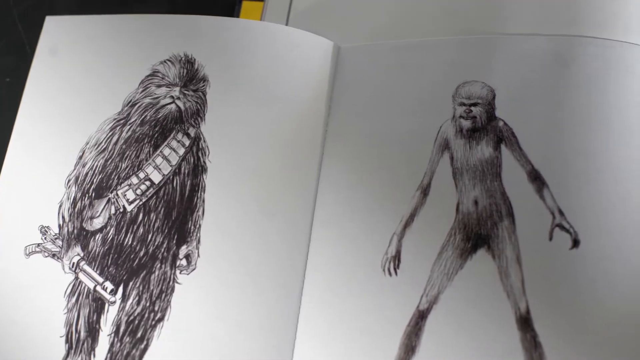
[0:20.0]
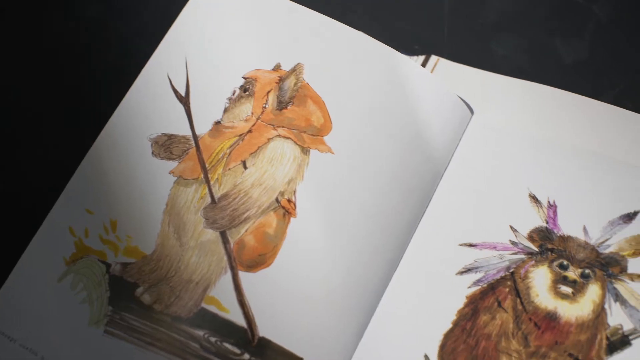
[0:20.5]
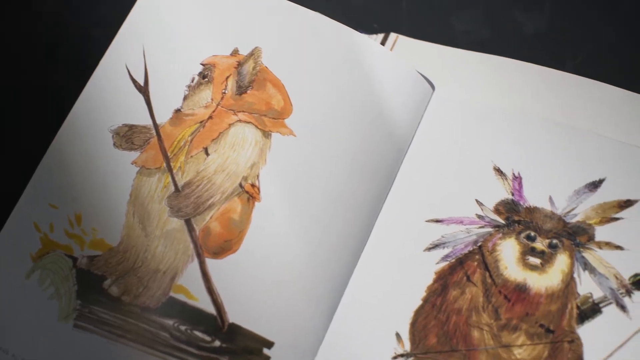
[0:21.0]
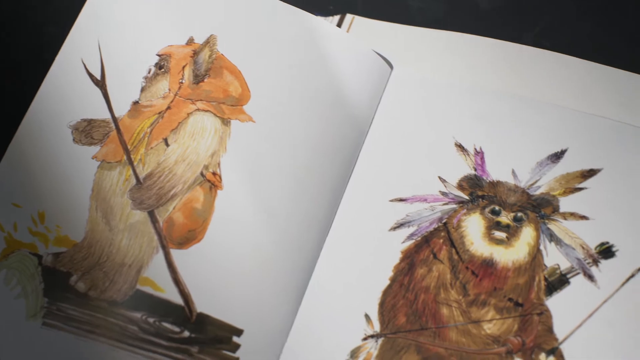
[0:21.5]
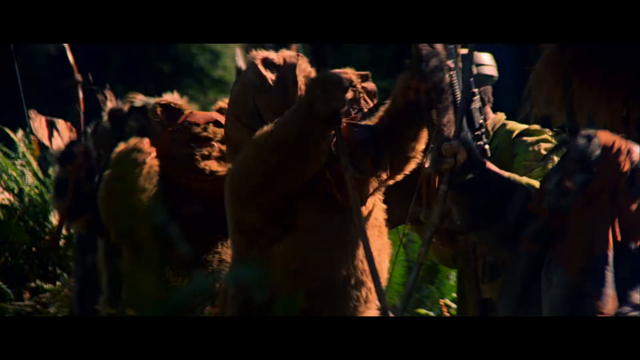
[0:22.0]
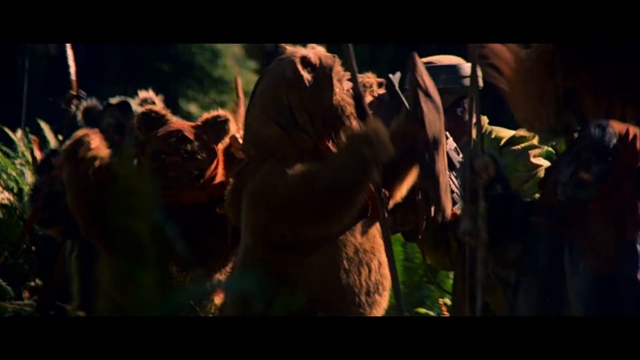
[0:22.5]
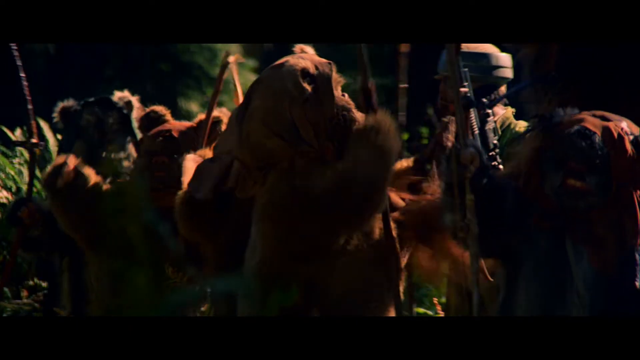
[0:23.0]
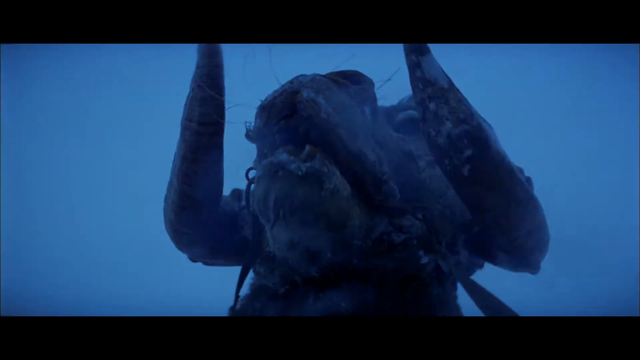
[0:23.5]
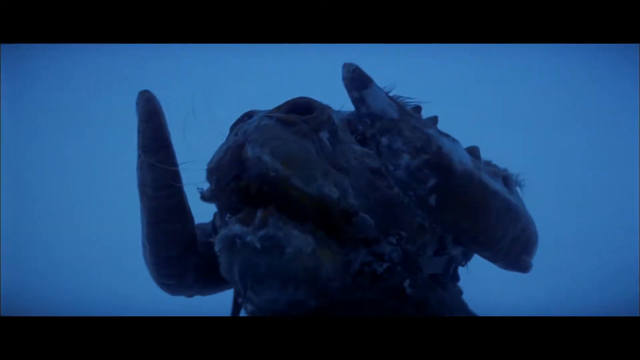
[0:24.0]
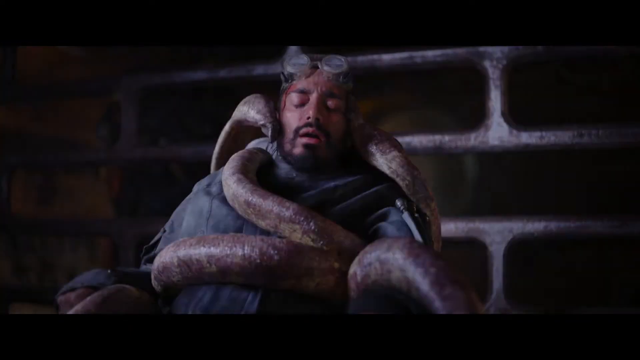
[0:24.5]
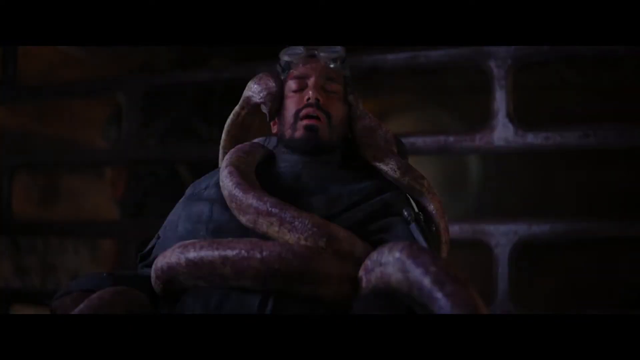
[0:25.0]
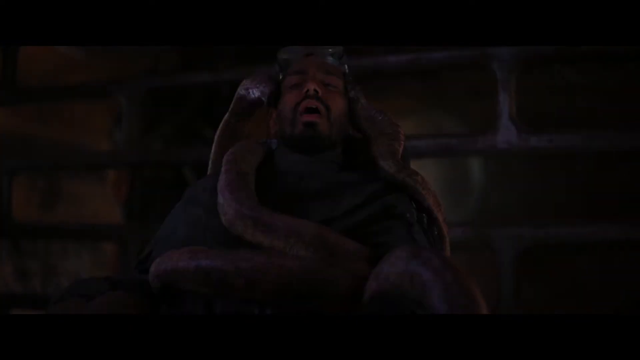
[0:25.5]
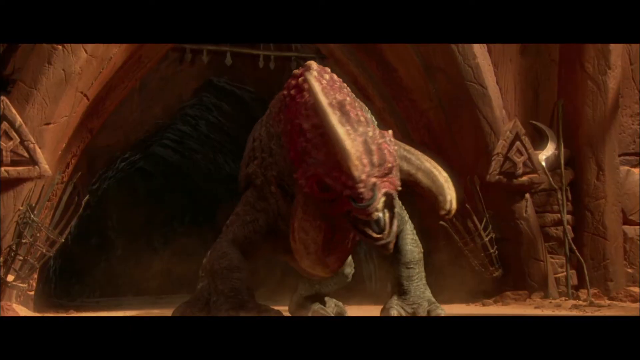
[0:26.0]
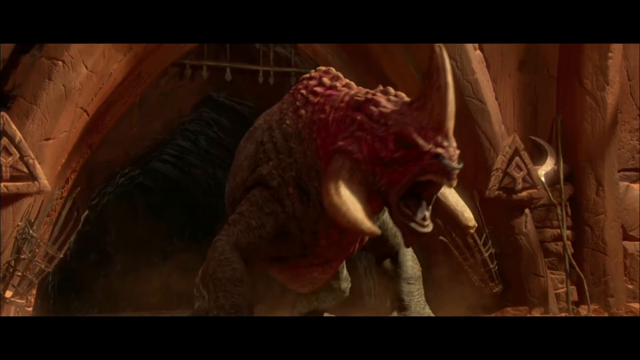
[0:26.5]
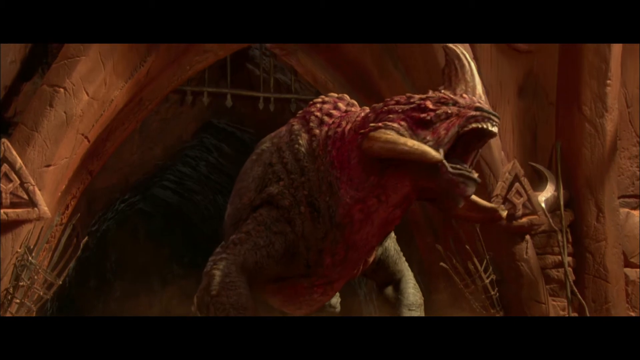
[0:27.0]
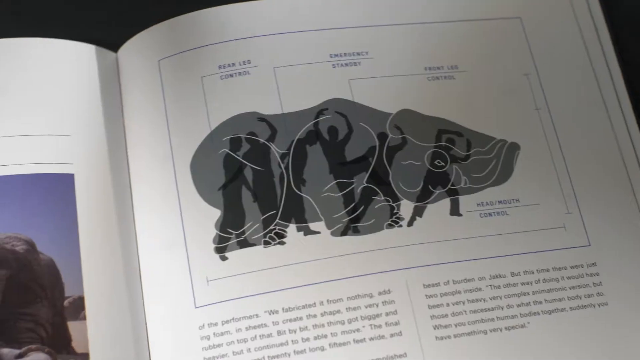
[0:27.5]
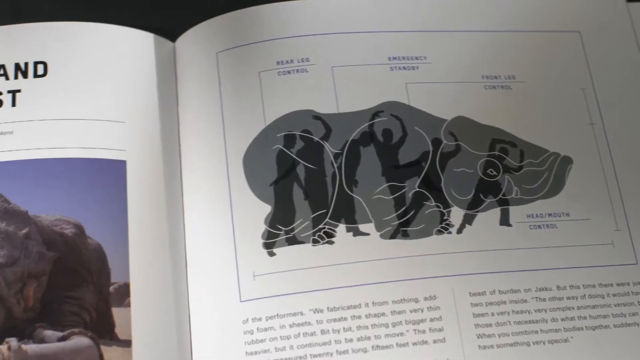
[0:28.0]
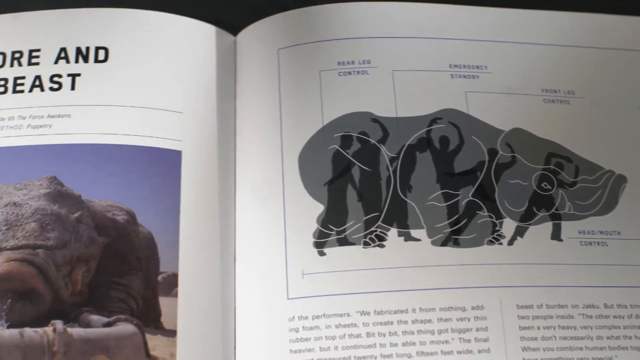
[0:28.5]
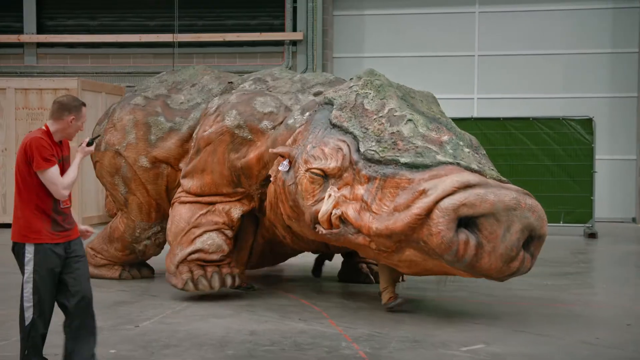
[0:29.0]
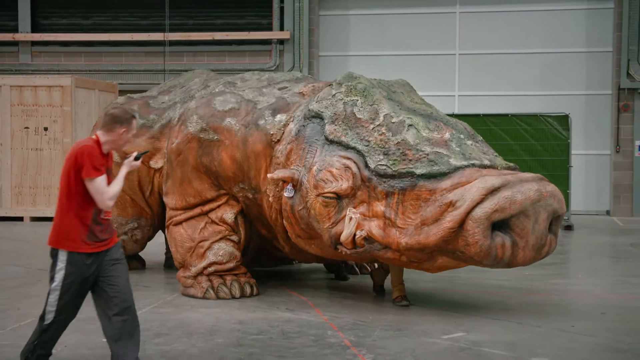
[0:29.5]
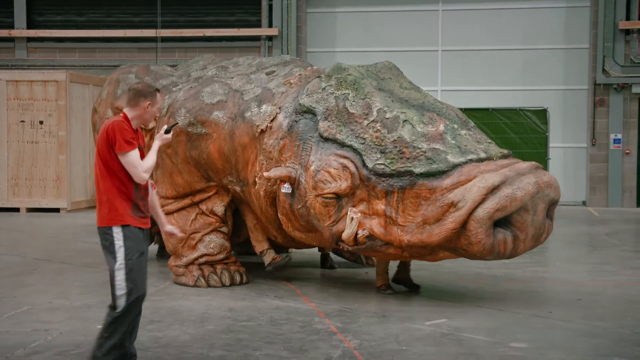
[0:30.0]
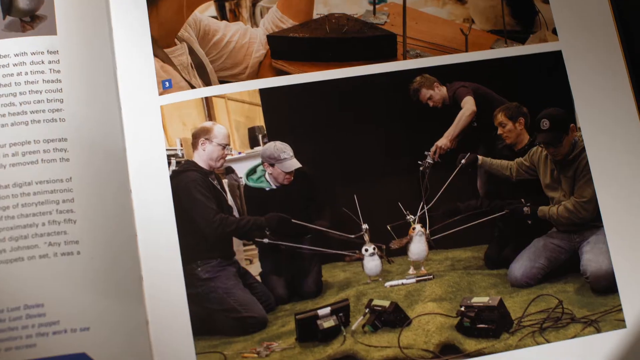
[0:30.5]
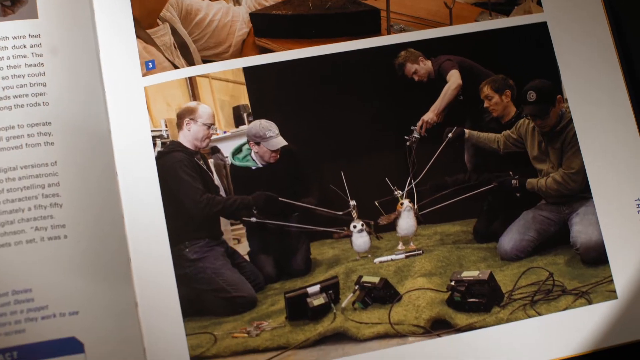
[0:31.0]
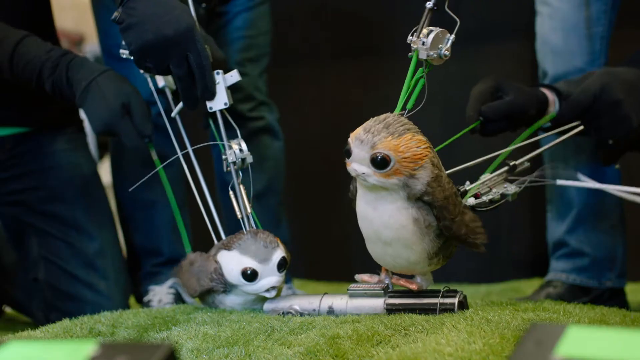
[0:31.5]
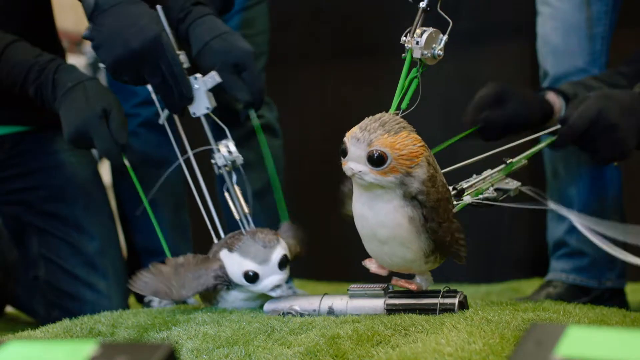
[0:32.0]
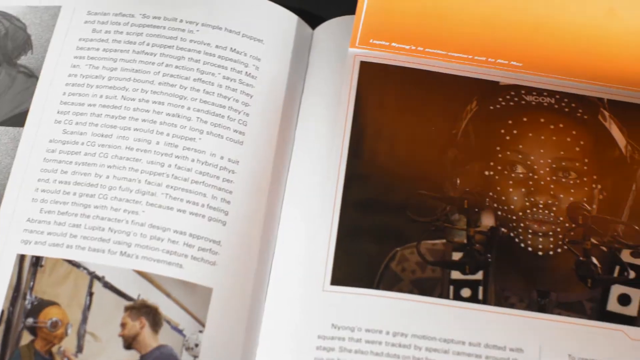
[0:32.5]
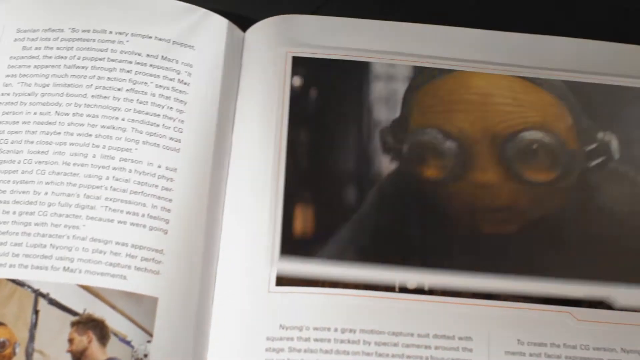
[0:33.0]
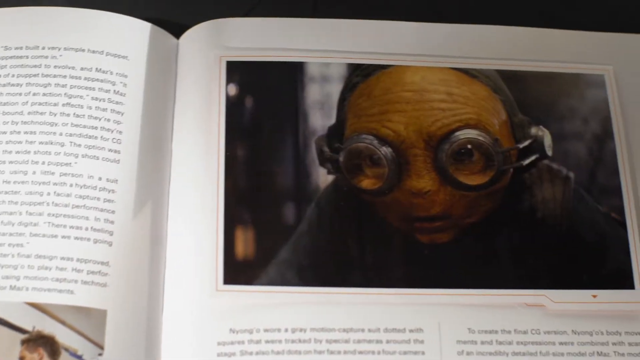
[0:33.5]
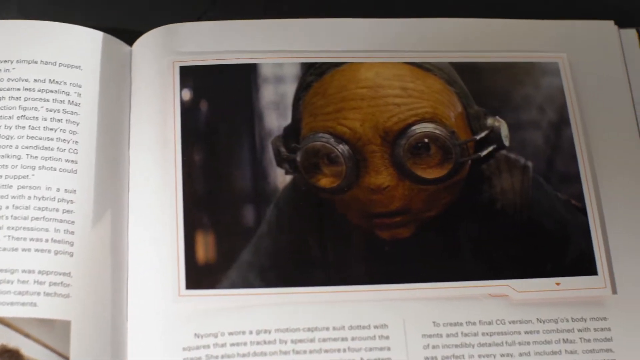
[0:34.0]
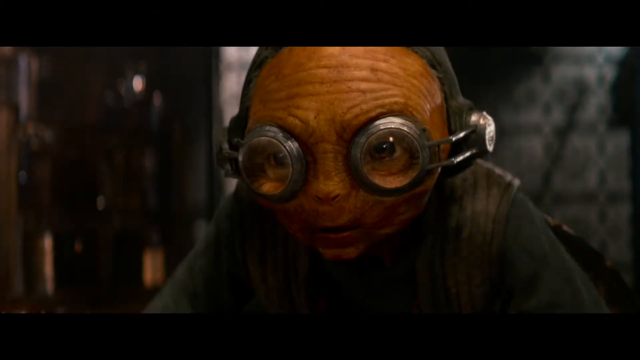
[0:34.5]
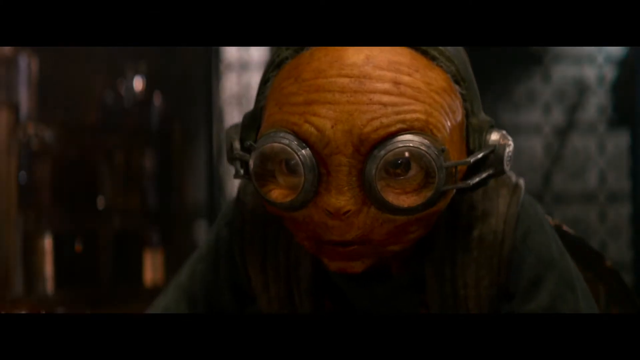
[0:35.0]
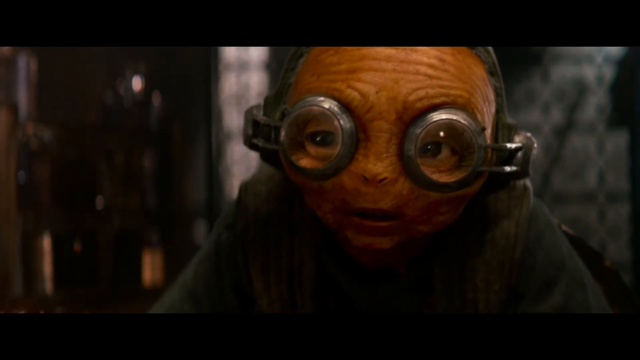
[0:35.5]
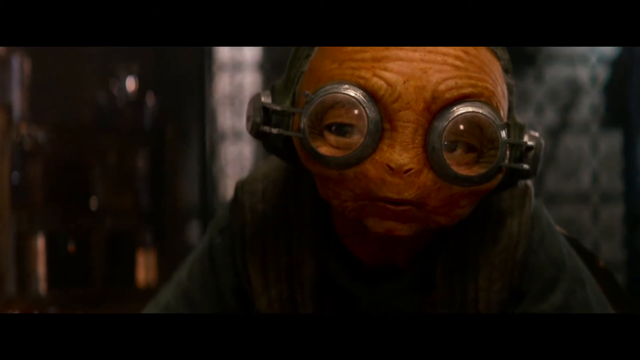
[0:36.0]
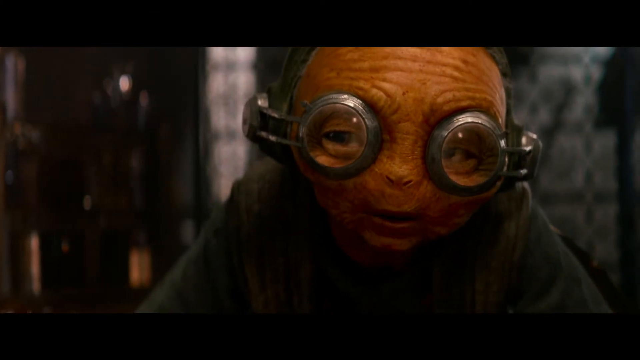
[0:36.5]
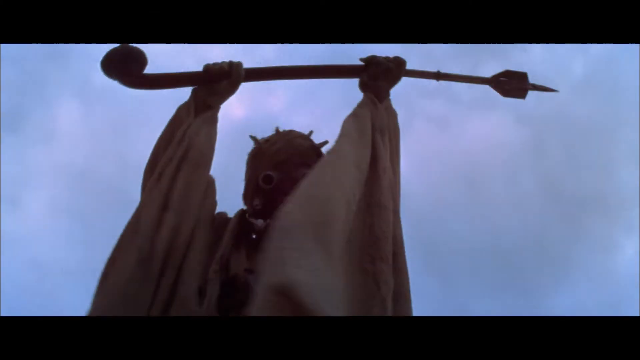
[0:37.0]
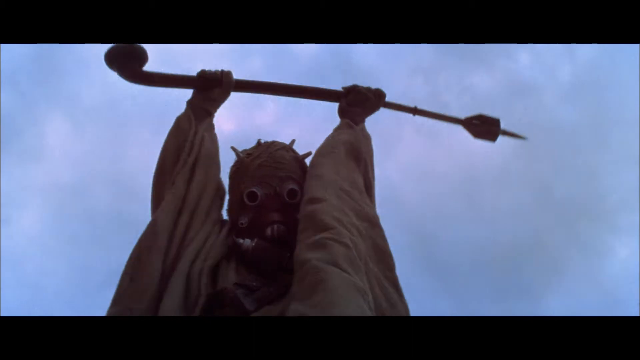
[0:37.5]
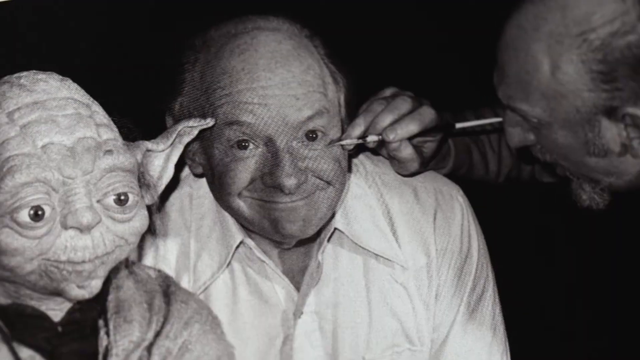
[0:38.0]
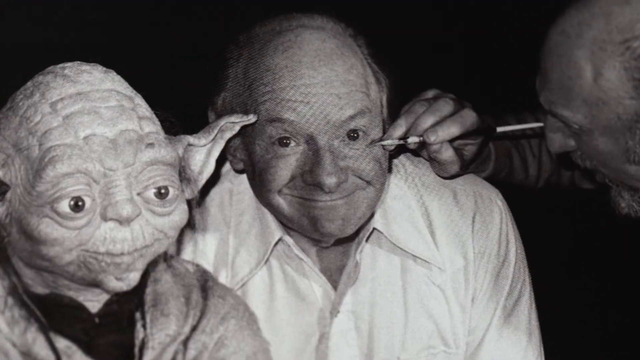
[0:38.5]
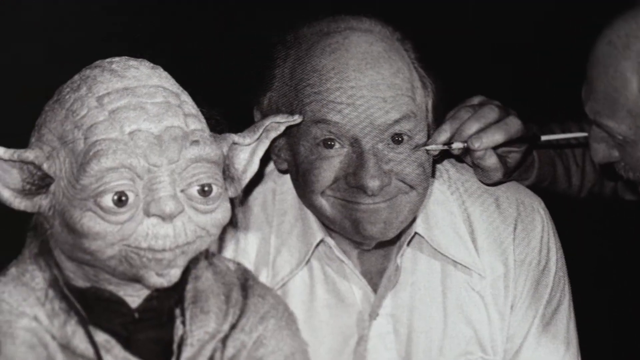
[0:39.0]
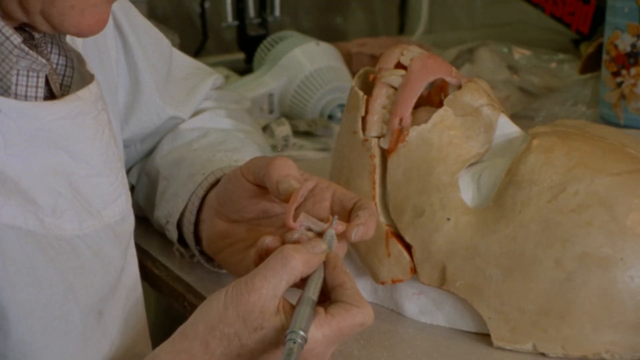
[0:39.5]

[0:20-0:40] Sketches of Star Wars alien-like characters appear, first a sketchbook showing an Ewok, a small, furry, teddy bear-like creature. Several other kinds of creatures follow, including a giant, kind of dinosaur-like creature coming out of a cage. Another creature is inside a studio; it seems to have been designed as a robot, but there are actually feet underneath it. A page from a book shows penguin-like creatures that are also robotic-like, followed by more pages of different characters: an alien character who looks really old and wears goggles, and a Tusken Raider, a human-like character holding weapons. A Yoda model appears with an actor right beside it who looks similar. Finally, a mask model is shown being crafted by an expert.